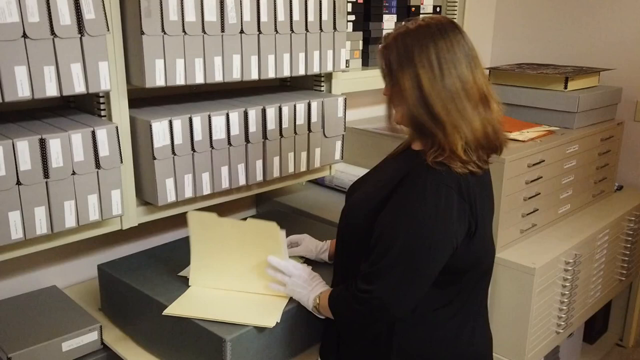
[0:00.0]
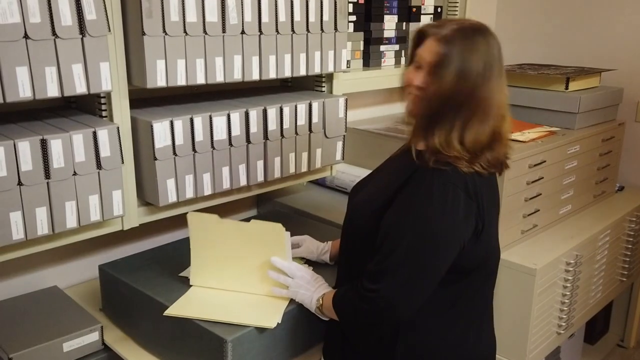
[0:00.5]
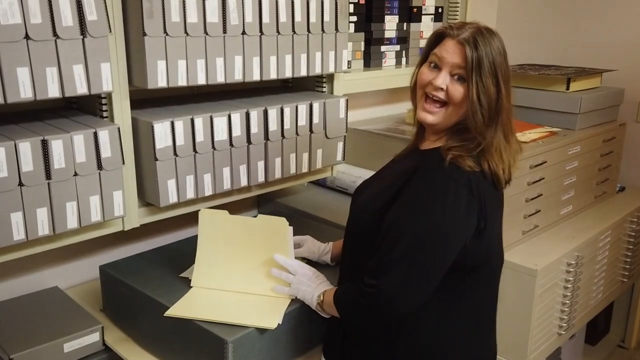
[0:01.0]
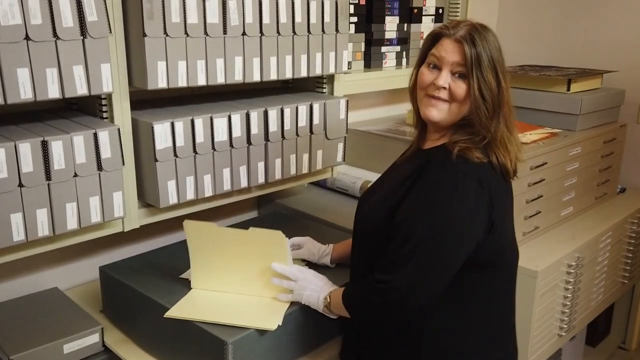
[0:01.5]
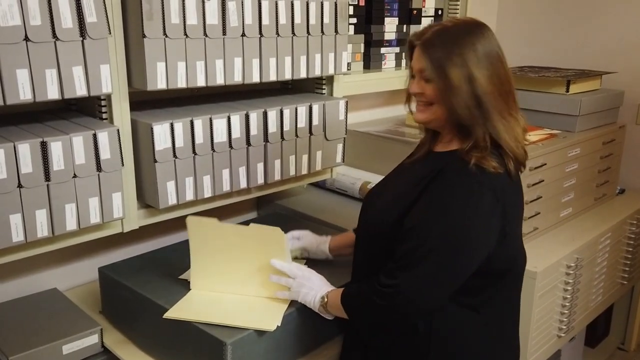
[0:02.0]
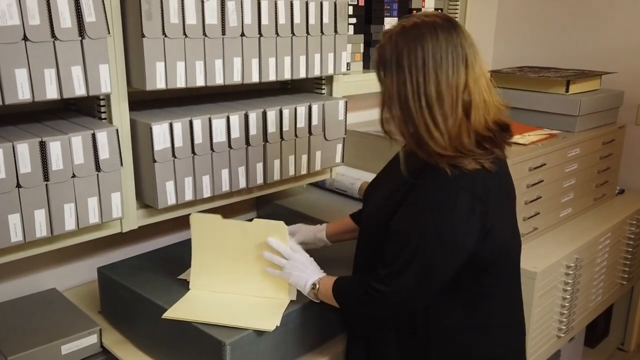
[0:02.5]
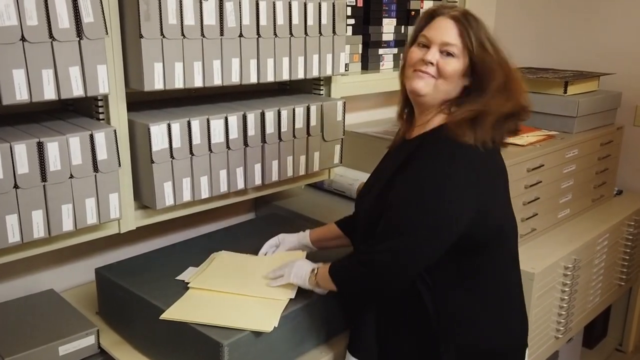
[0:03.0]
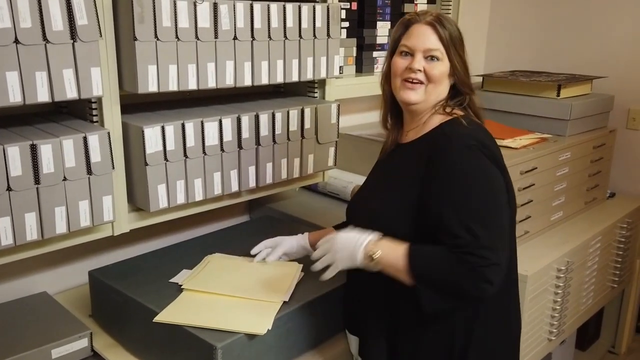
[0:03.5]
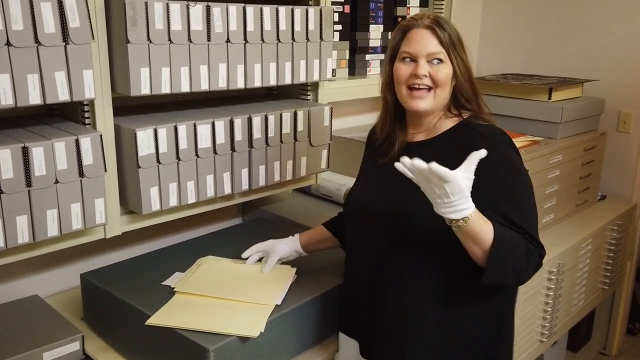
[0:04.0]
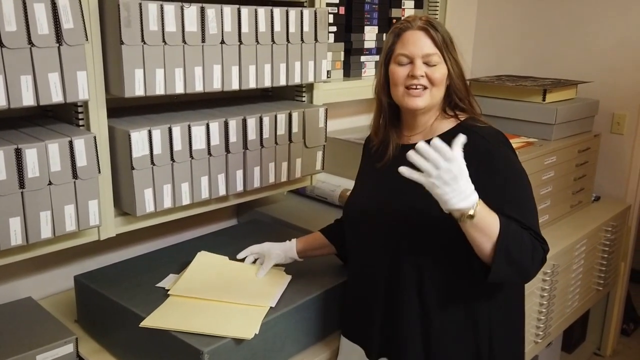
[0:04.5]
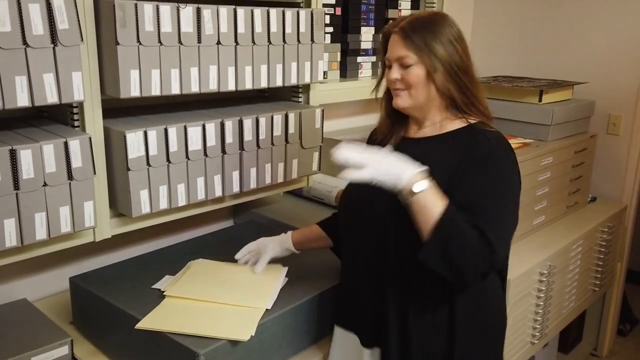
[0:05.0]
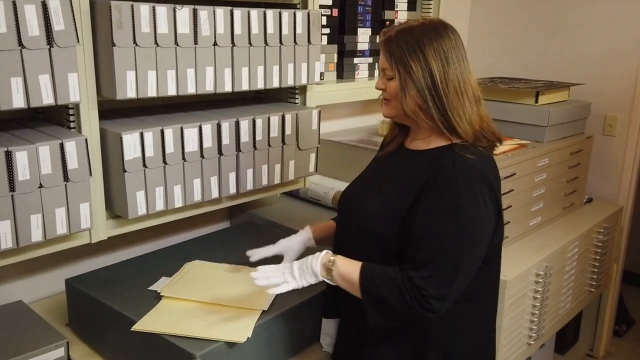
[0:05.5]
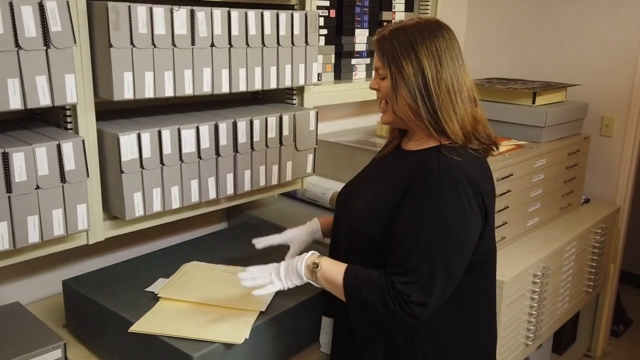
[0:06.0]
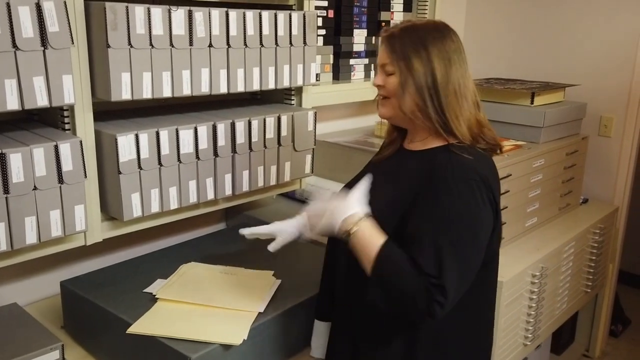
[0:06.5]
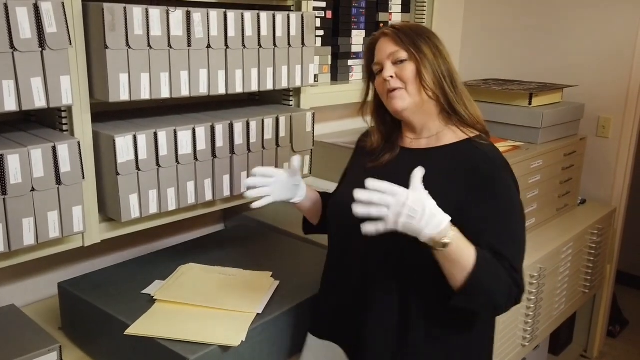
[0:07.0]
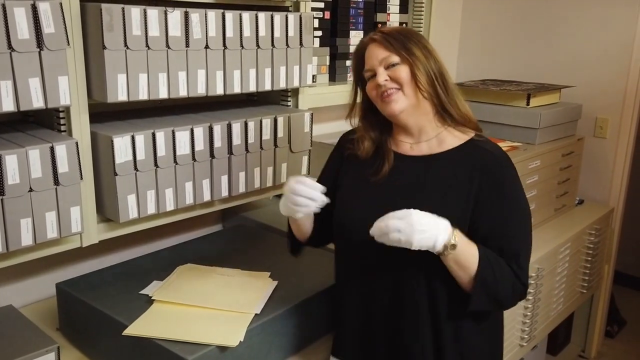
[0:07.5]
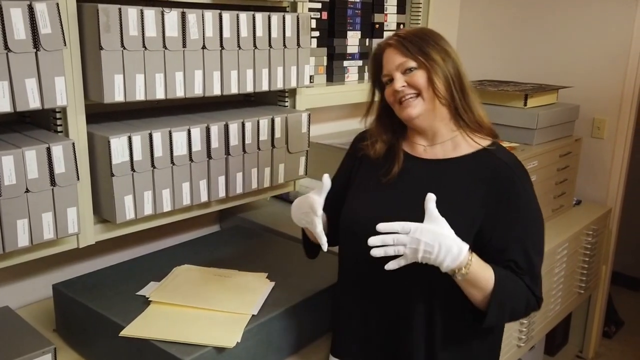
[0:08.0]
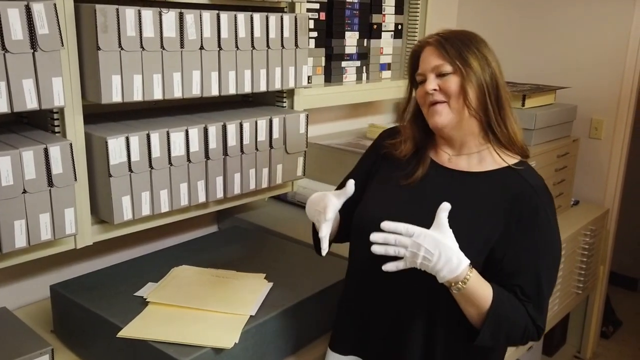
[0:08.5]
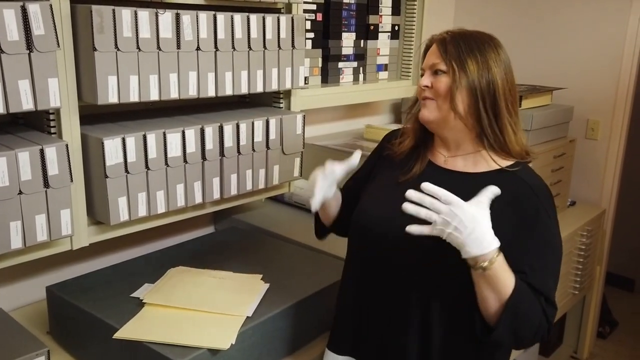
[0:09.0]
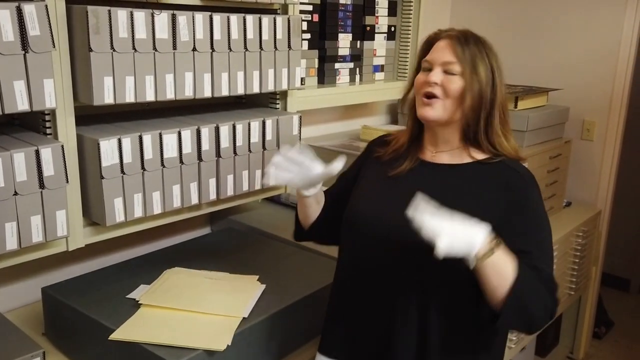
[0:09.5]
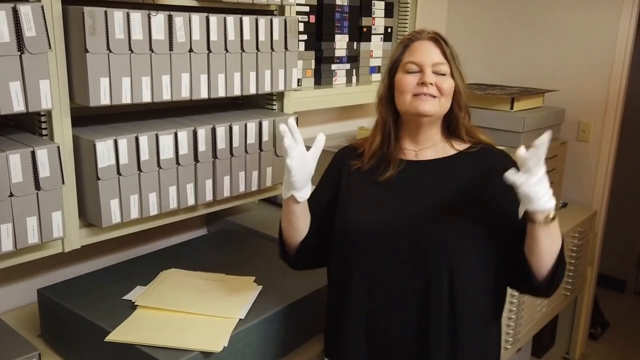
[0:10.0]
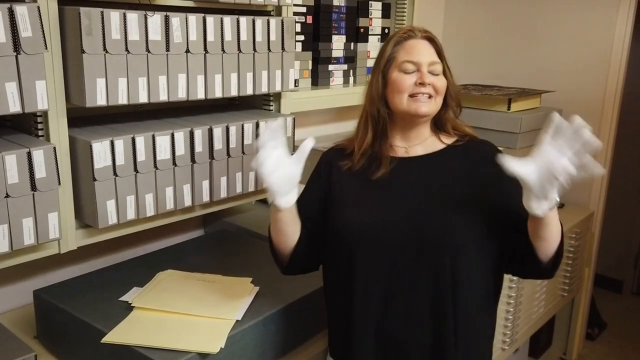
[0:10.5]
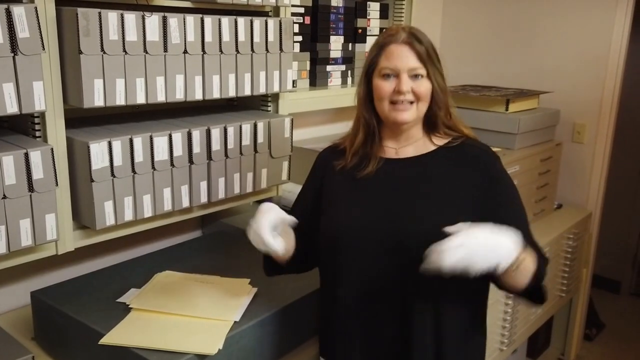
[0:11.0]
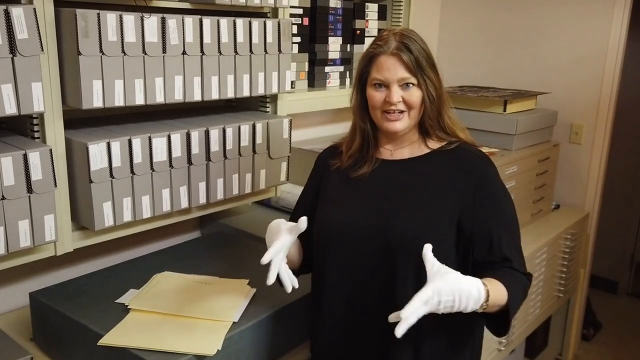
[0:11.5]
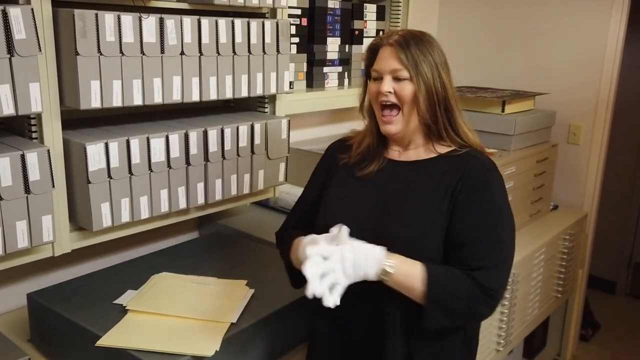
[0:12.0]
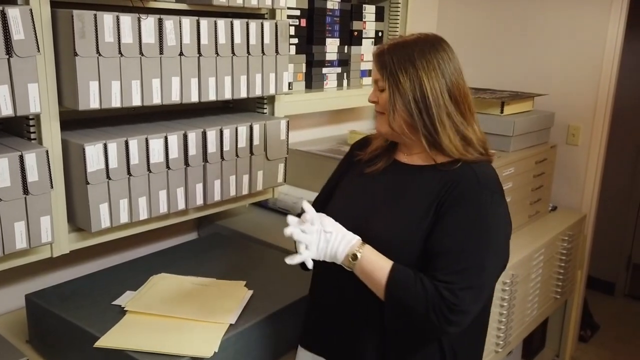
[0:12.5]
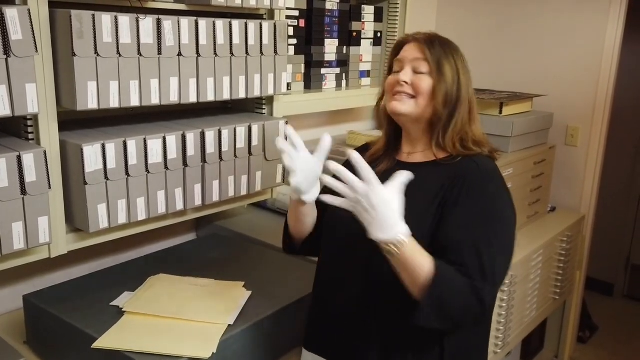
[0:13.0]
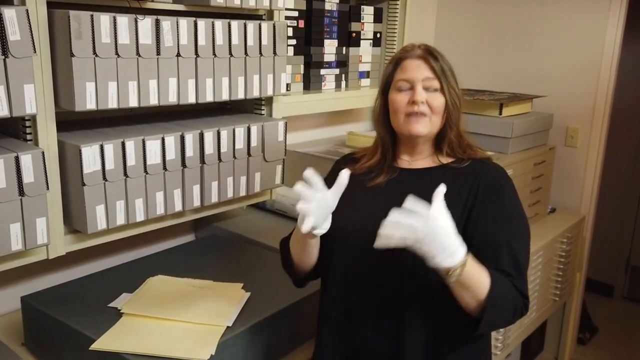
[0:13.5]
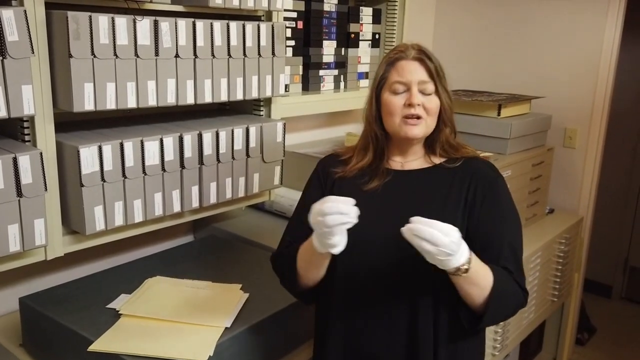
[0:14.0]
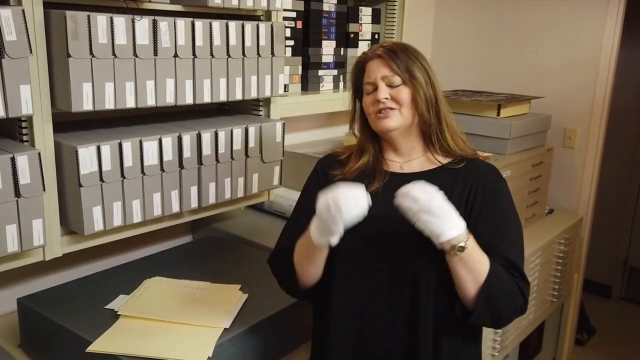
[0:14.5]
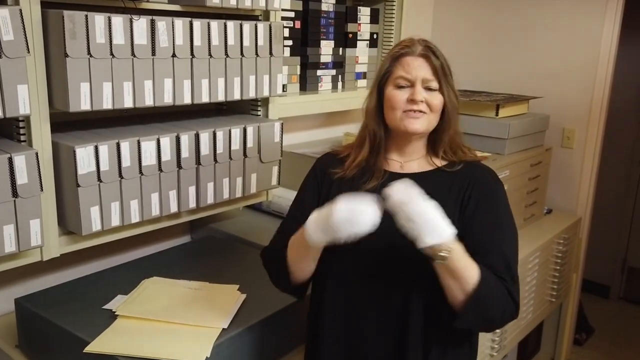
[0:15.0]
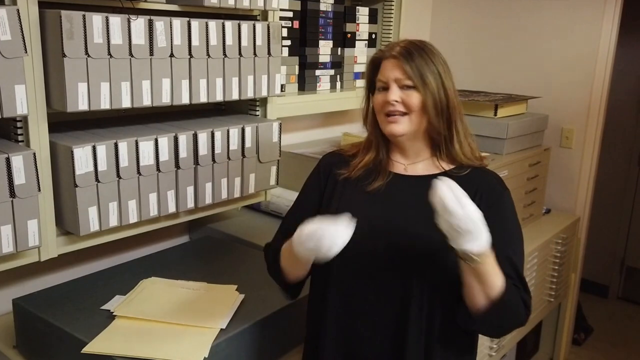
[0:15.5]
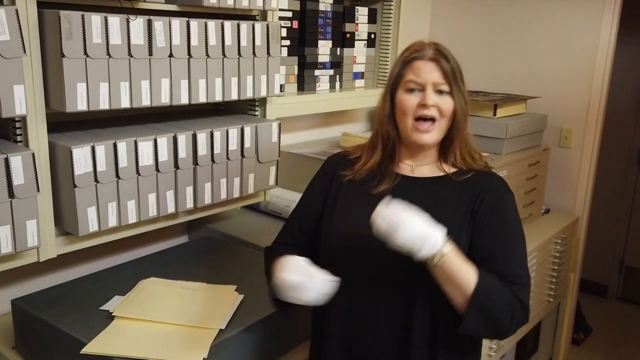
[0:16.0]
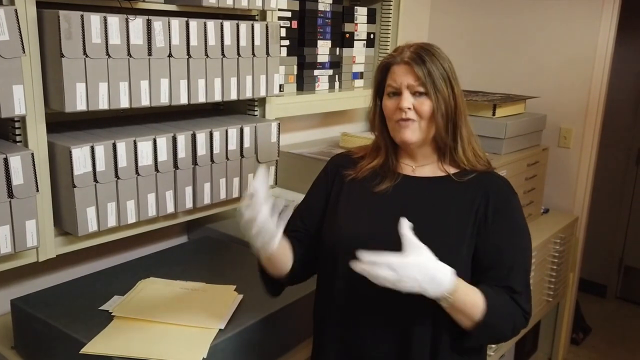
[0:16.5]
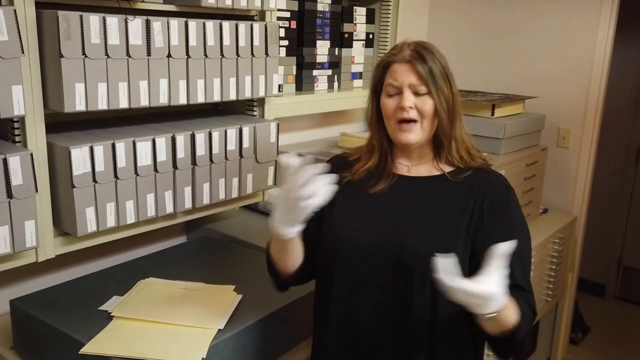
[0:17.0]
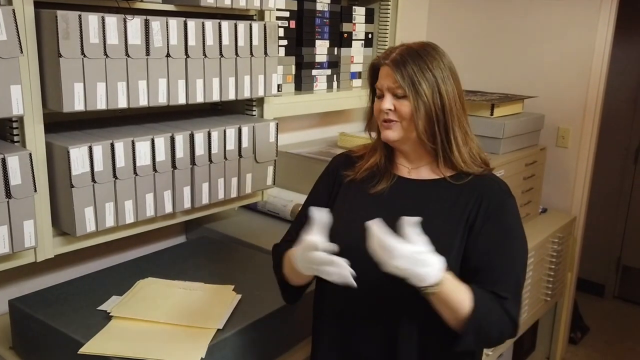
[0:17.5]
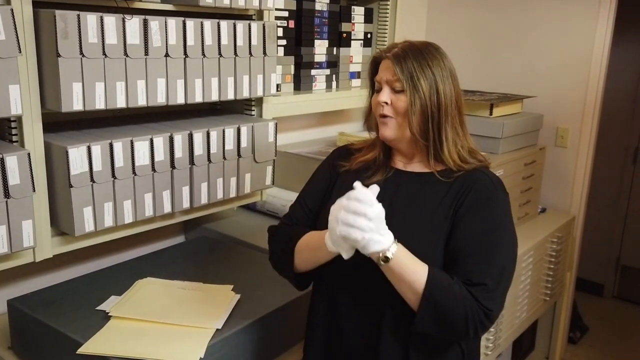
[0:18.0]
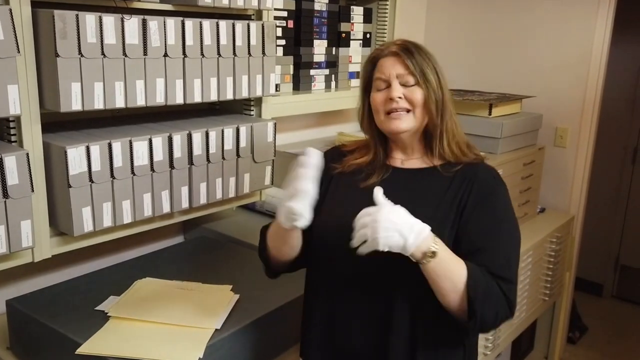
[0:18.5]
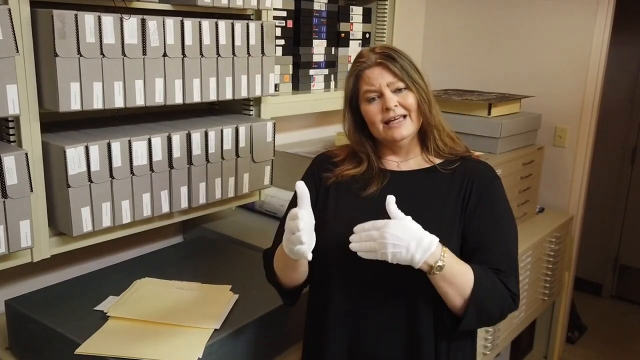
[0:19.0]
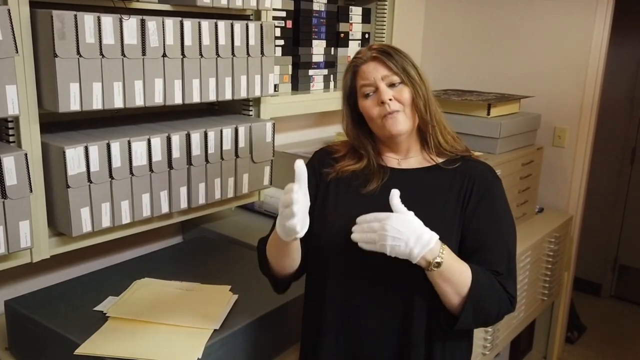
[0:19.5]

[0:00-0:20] A woman with dark hair is facing to her left, then turns her head to look at the camera and begins by smiling. She holds a vanilla folder in her left hand and wears white gloves. She begins speaking to the camera with one hand up in front of her chest, sort of pointing back to the vanilla folder, then looks back at the camera. She uses her hands to emphasize what she is saying, moving them back and forth with each point. Filing cabinets are visible behind her, so she appears to be in some kind of office environment while being interviewed.